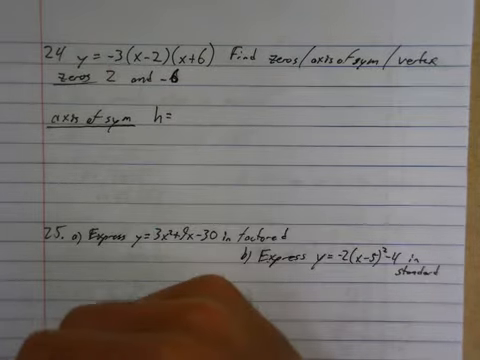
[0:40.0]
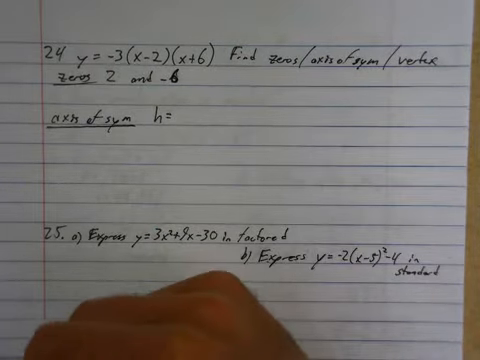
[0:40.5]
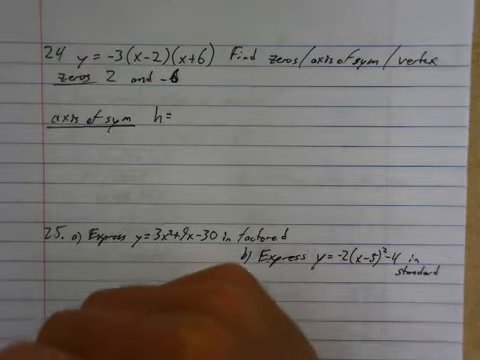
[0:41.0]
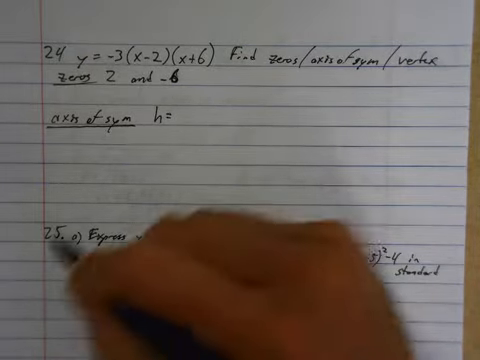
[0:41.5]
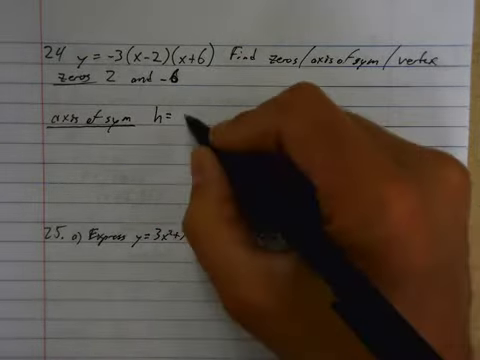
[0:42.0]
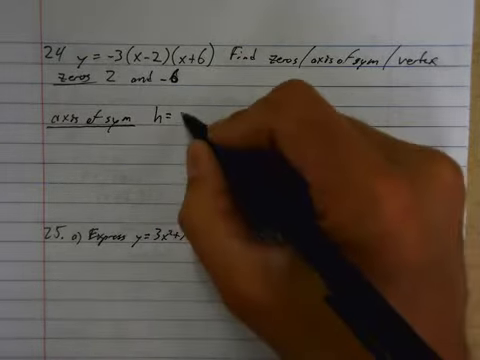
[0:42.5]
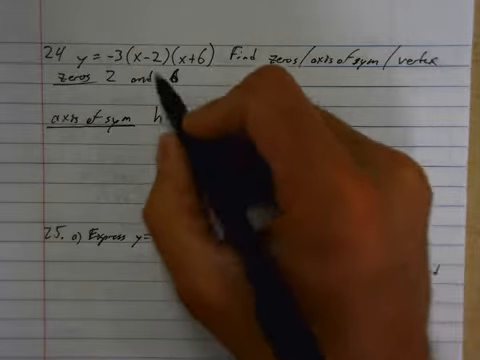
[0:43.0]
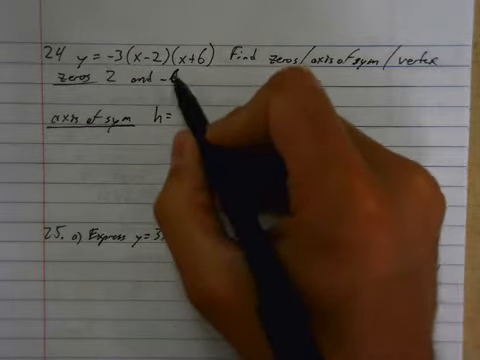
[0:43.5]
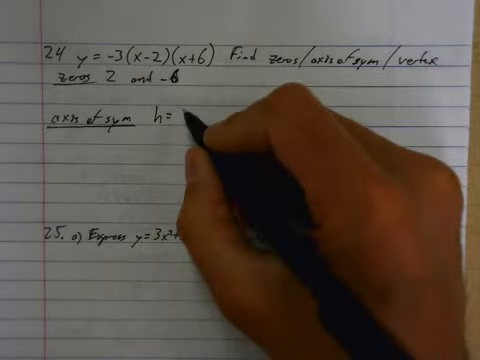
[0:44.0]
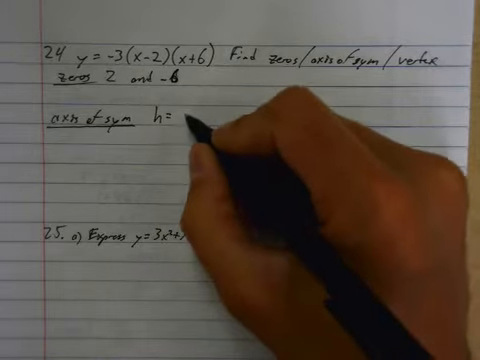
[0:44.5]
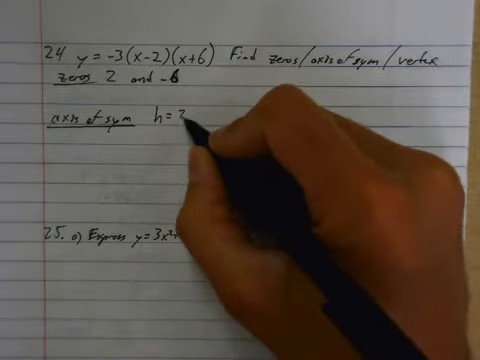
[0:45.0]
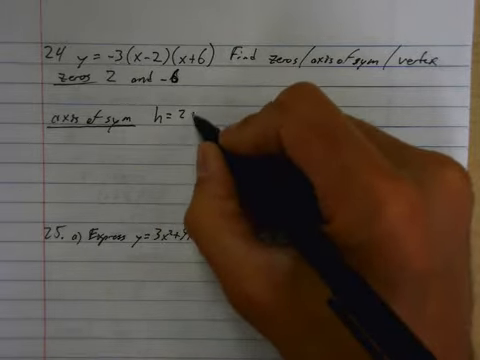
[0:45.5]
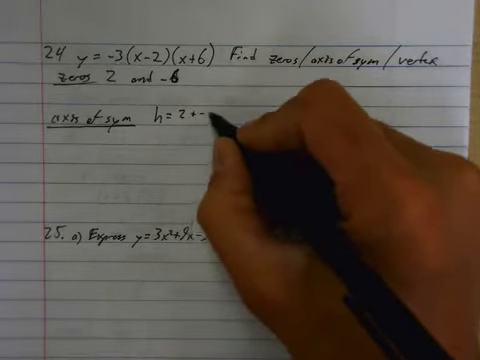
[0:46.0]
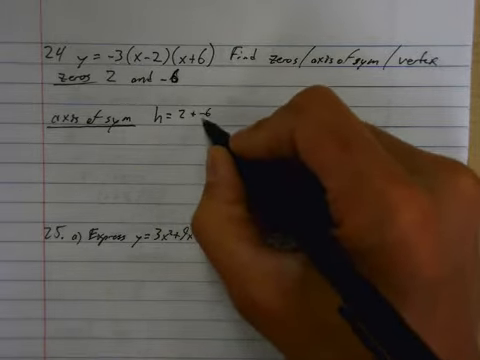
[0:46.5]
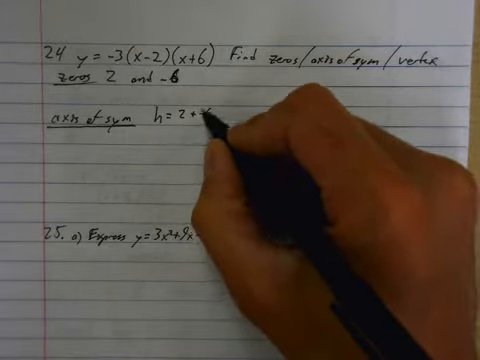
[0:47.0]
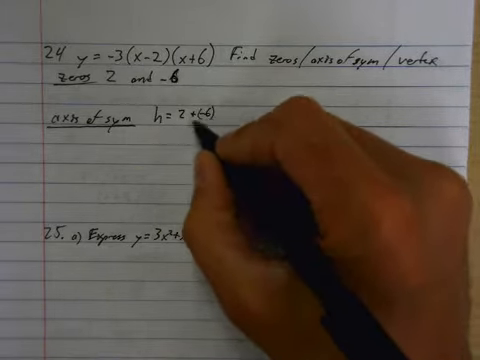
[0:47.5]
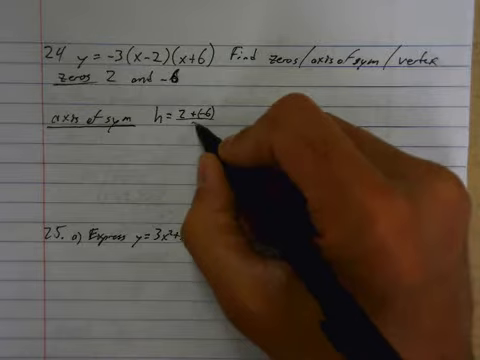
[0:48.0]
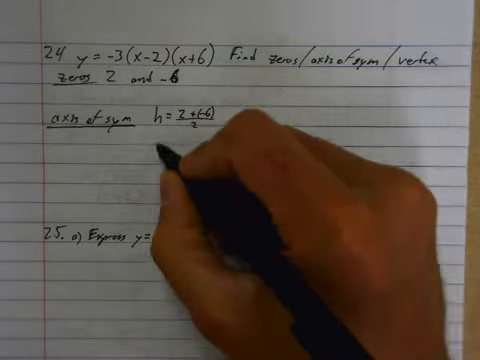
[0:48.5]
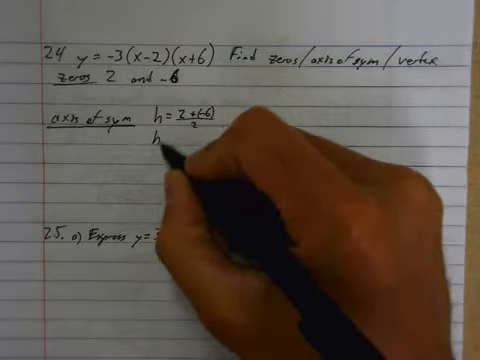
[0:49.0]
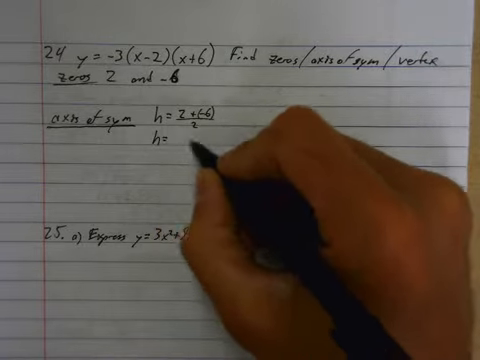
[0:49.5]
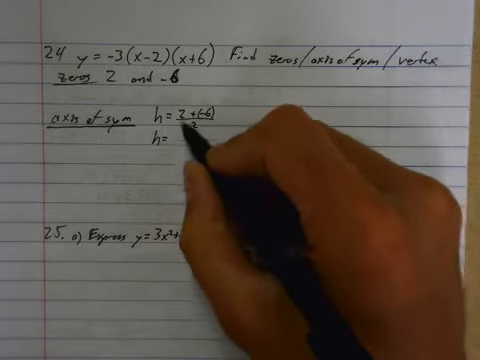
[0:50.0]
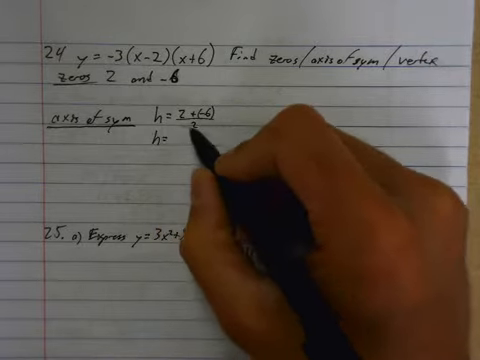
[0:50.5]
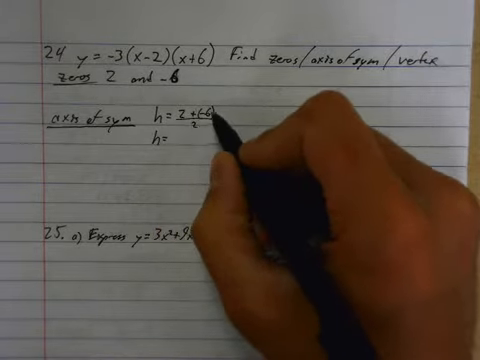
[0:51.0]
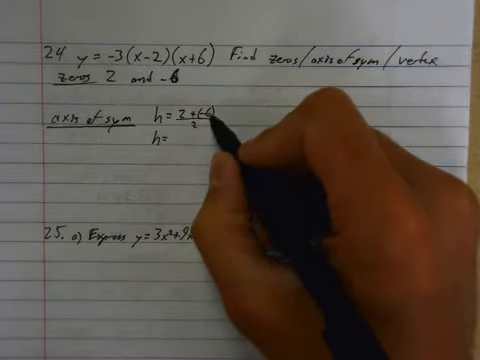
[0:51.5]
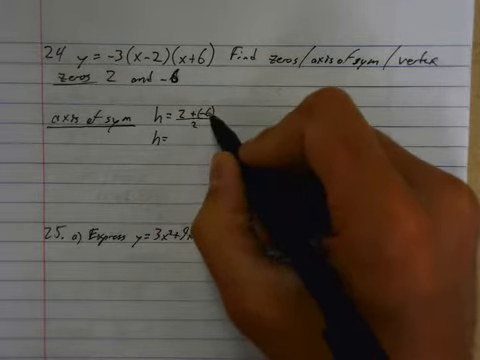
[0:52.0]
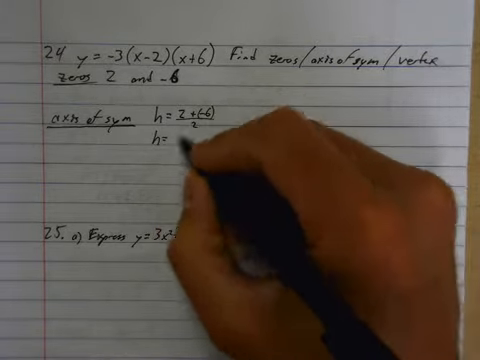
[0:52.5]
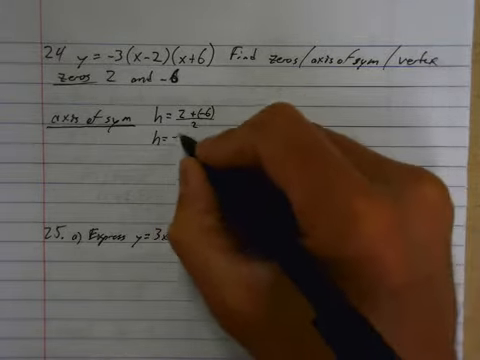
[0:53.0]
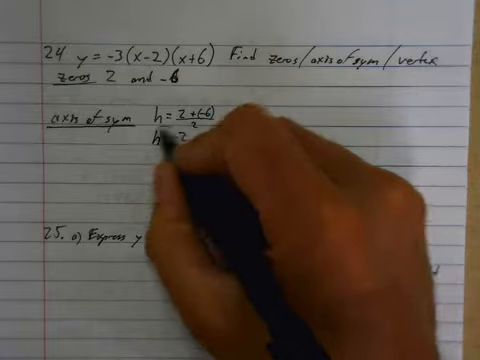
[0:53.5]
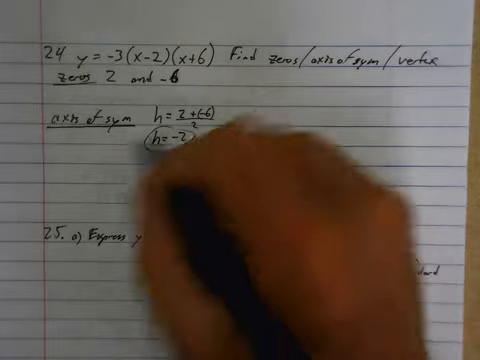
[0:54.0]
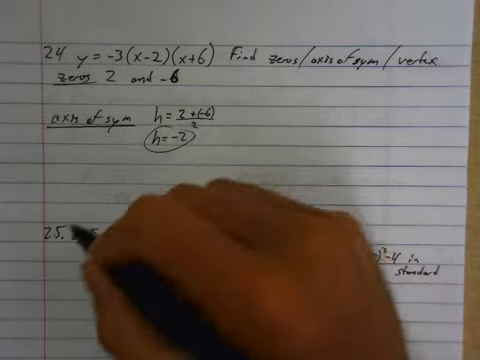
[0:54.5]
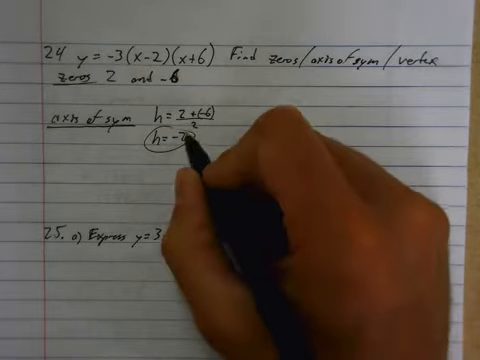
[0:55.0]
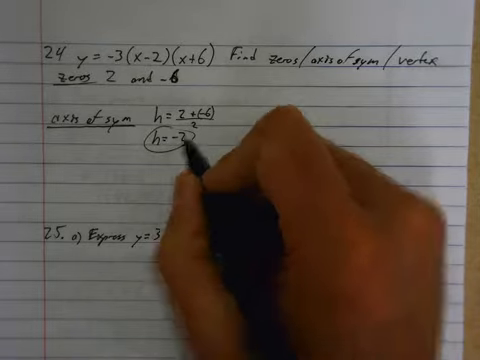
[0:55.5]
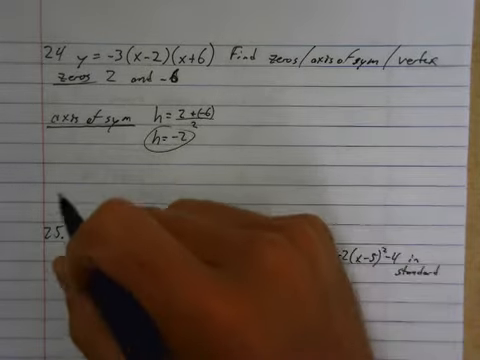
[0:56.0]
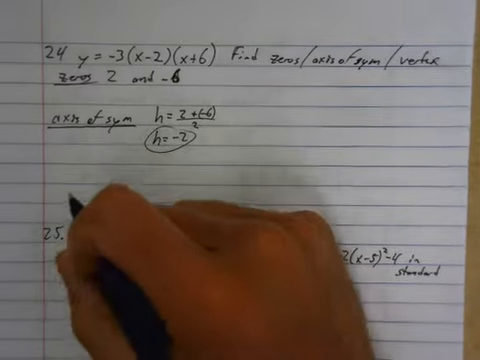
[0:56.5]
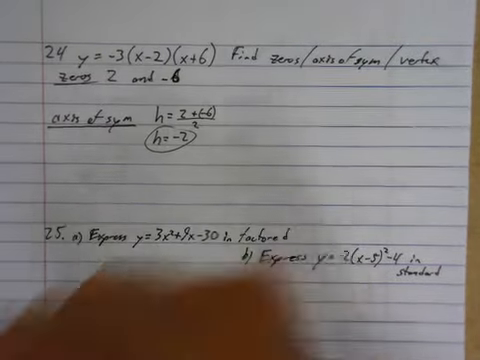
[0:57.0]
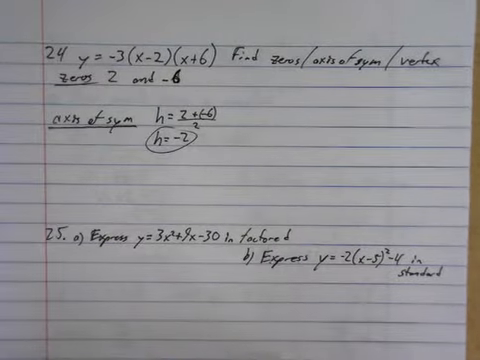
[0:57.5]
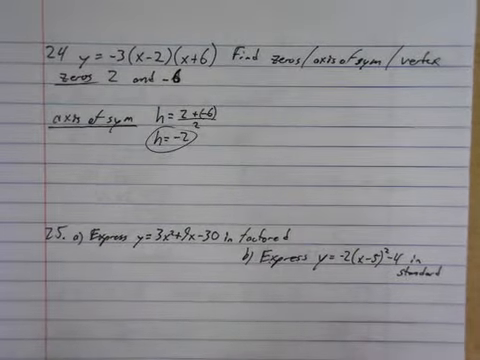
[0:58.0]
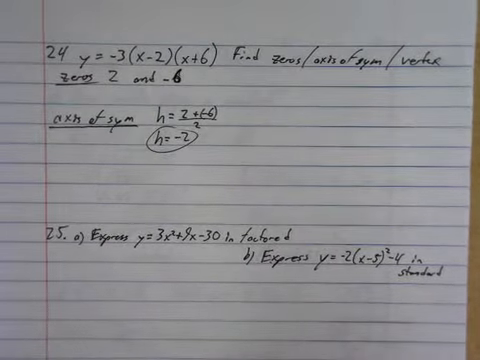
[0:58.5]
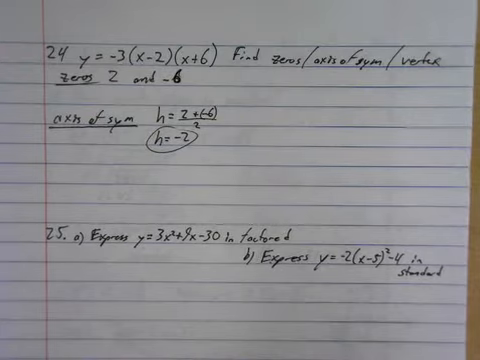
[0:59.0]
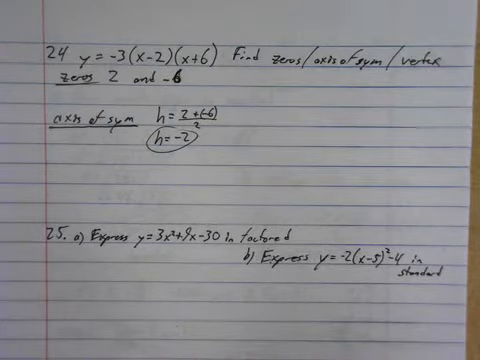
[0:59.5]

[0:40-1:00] The man with the black pen keeps writing, adding more information to the problems on the binder paper, which is laid out on a desk; his right hand is visible writing. The top reads "24 y = -3(x - 2)(x + 6)" with "find zeros", and "zeros" is underlined with 2 and -6 below it. Below that, "axis of symmetry" is written and underlined, followed by "h = 2 + (-6)". The bottom of the page shows "25. a) express y = 3x + 5". He draws a line under h = 2 + (-6), writes the number 2 underneath, then writes "h = -2" and circles it. The pen then moves toward the bottom of the page and disappears.